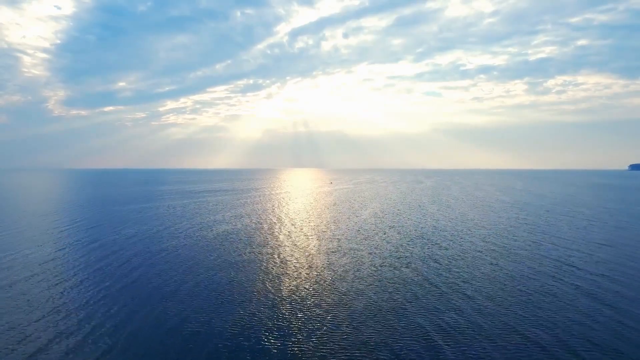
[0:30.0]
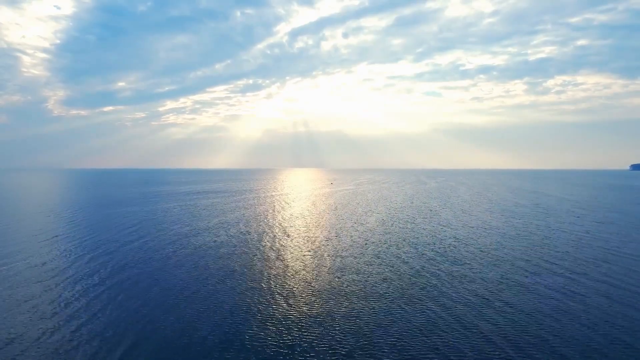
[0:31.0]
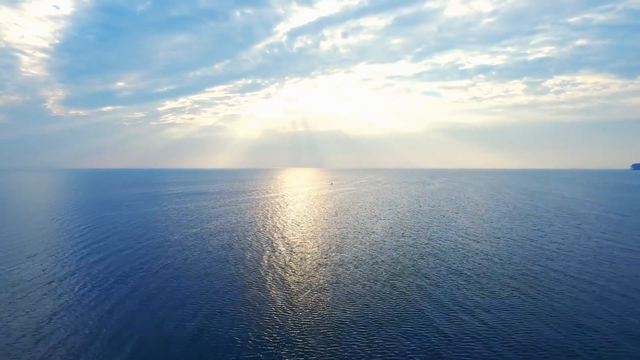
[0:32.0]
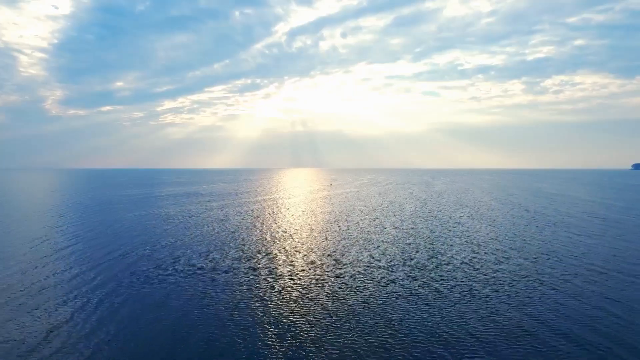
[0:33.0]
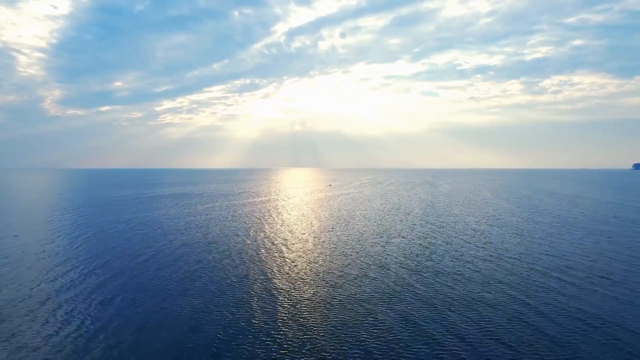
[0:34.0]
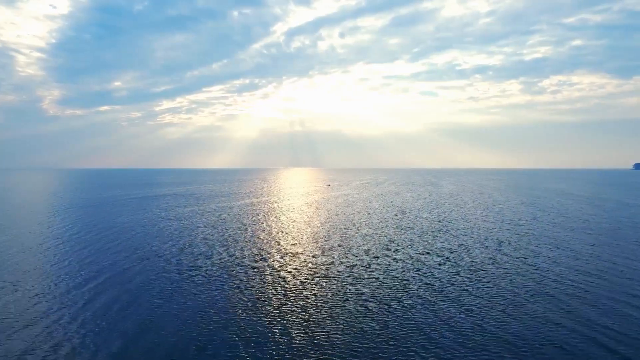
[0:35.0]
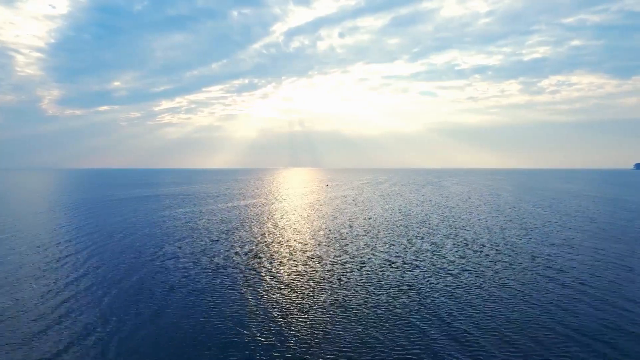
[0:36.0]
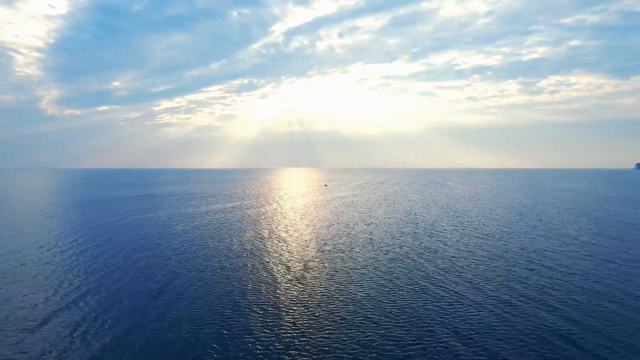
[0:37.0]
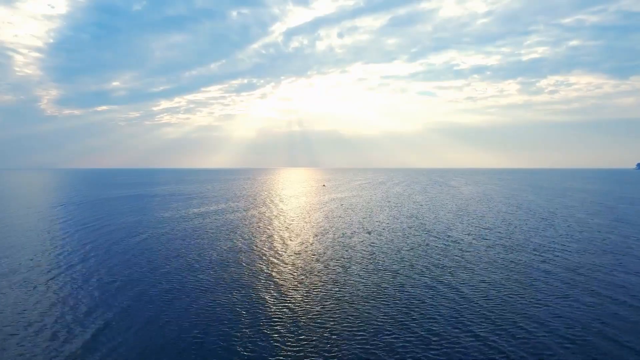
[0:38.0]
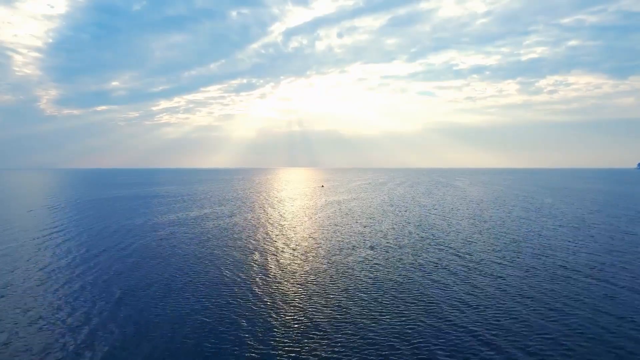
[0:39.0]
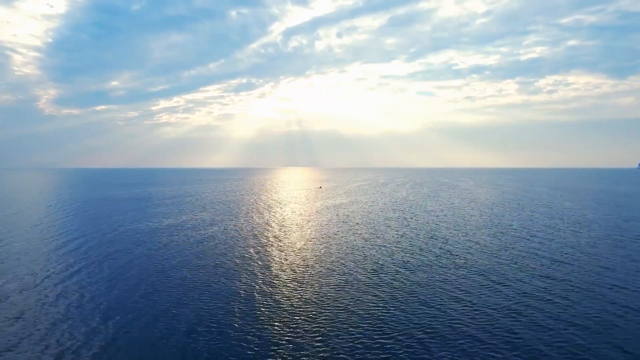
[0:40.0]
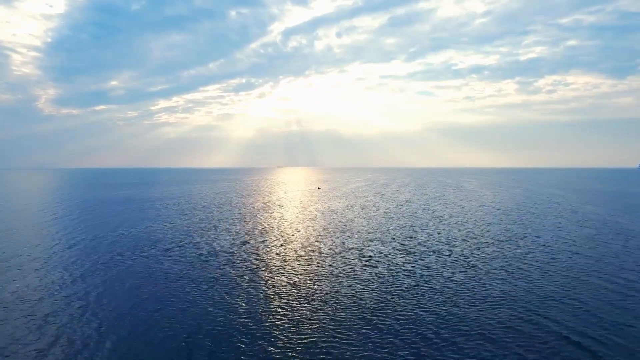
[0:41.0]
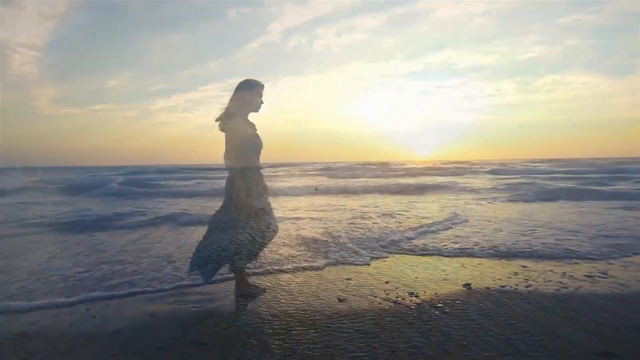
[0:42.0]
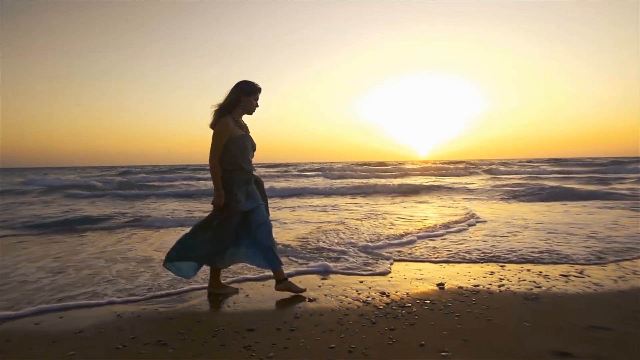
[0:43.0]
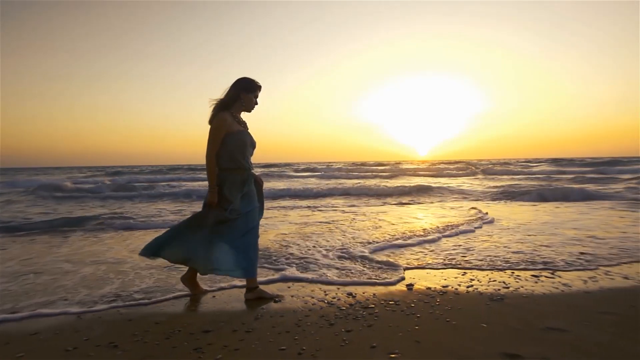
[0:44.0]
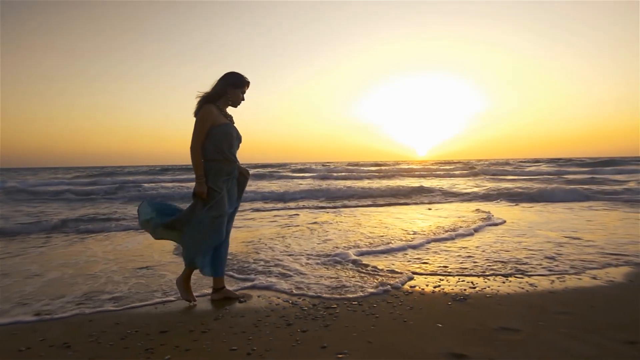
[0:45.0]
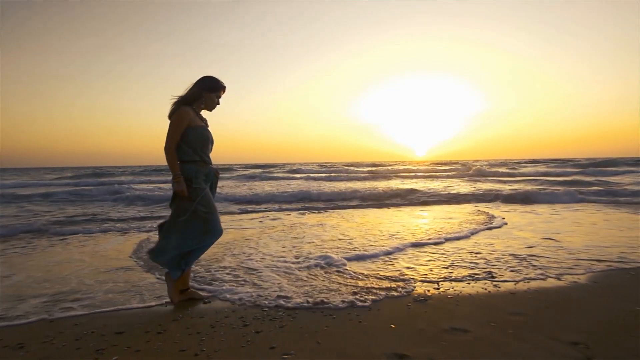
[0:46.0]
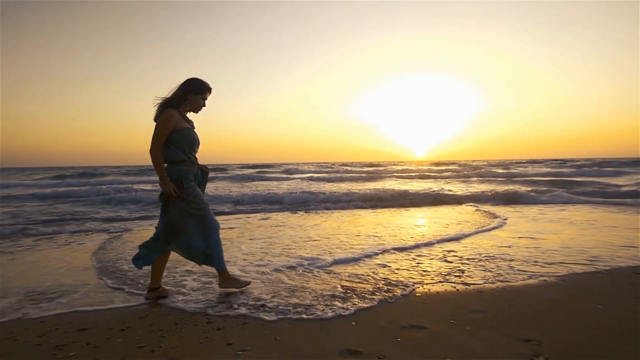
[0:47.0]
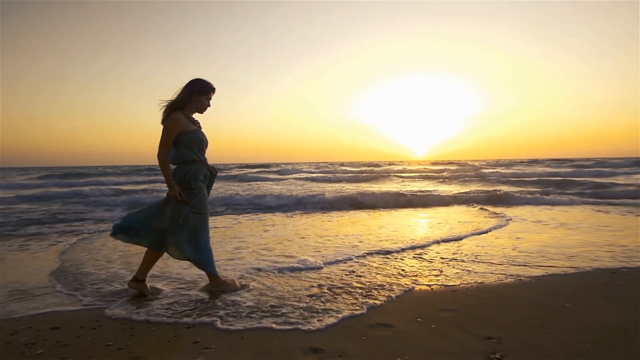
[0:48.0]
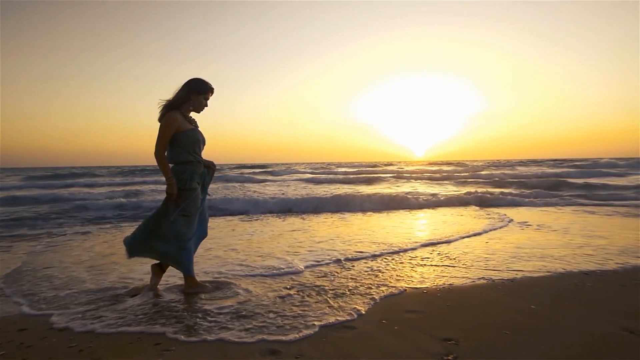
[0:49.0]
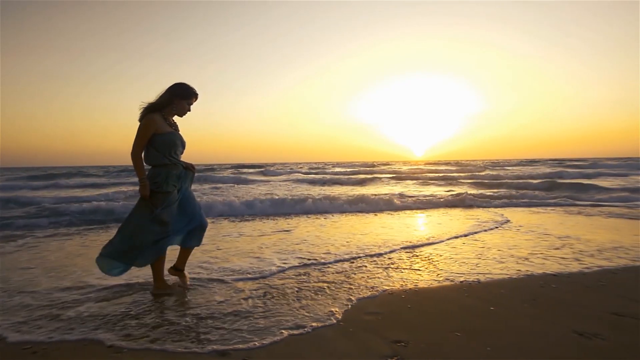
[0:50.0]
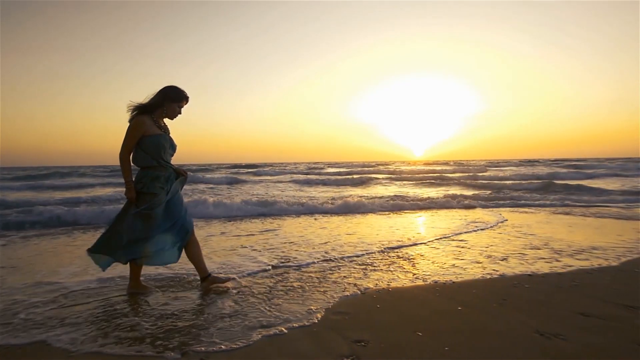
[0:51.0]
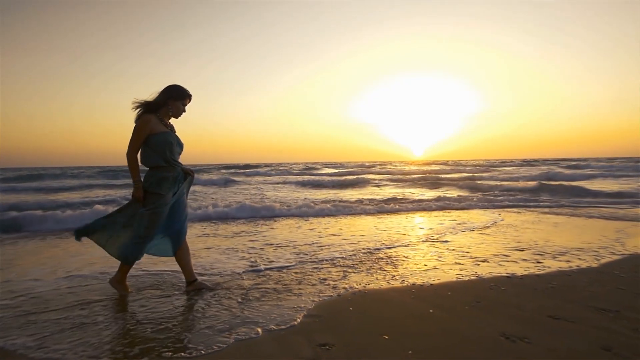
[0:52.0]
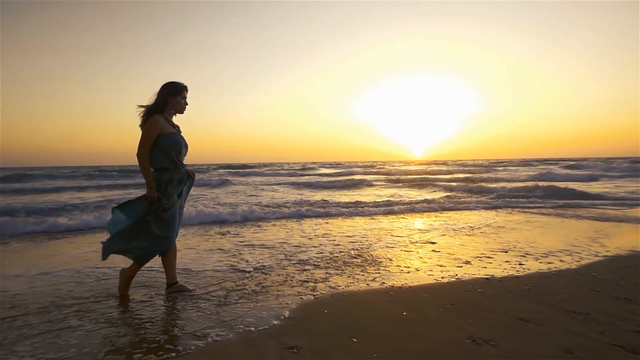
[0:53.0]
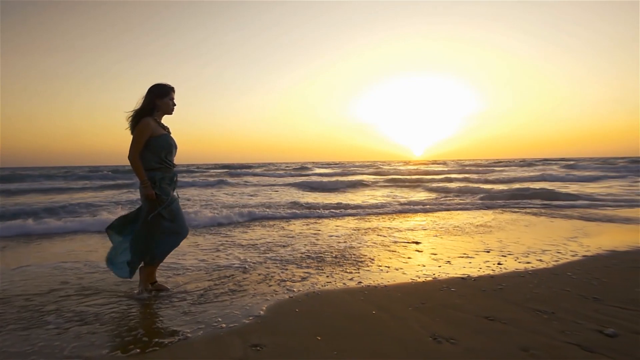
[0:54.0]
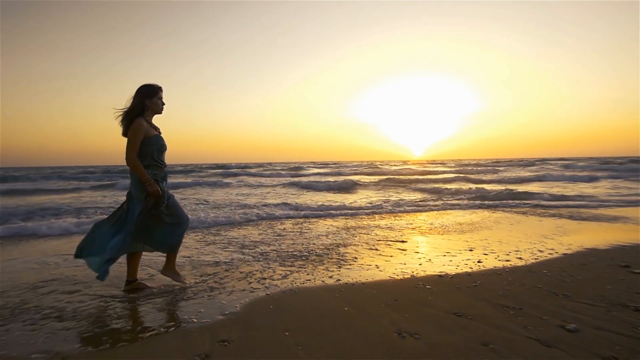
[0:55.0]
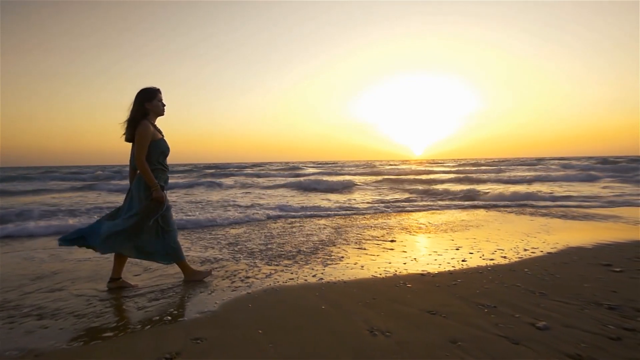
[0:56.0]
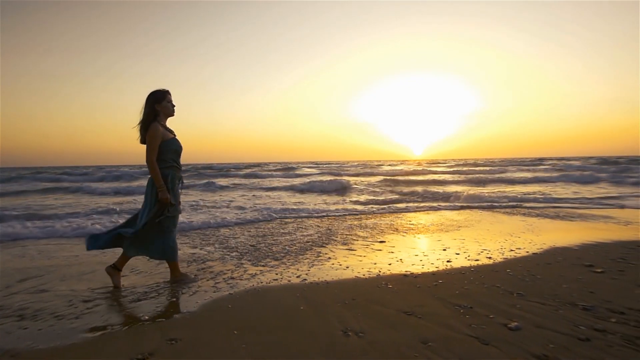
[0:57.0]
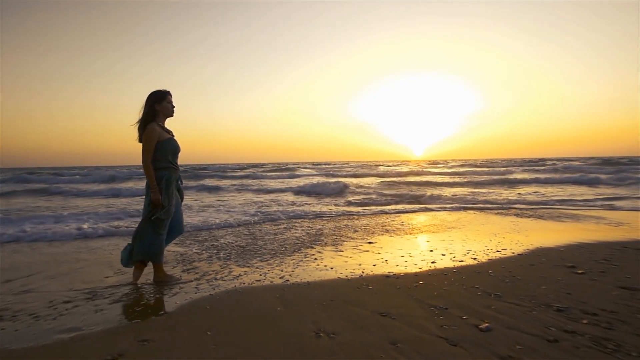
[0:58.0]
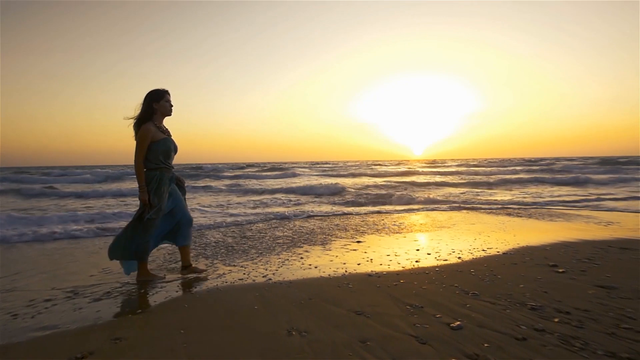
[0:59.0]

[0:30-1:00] The blue sky, light reflecting on the water, the horizon, beaches and hills are visible. Only a small portion of the hills can be seen, so it is unclear whether it is an island or hills, but it is land. A lady in a blue dress walks on the beach at sunset. The waves are not strong, and the wind blows her dress. She walks barefoot, looking down, as water from the ocean comes up onto the beach.